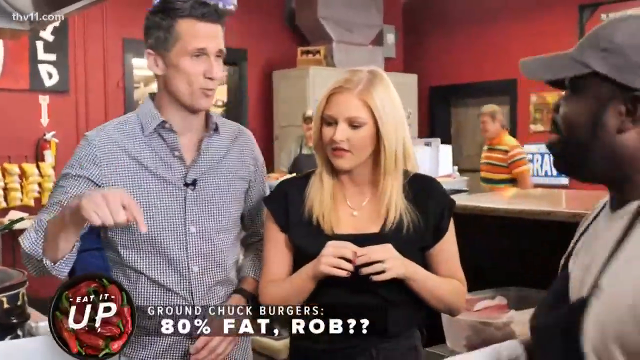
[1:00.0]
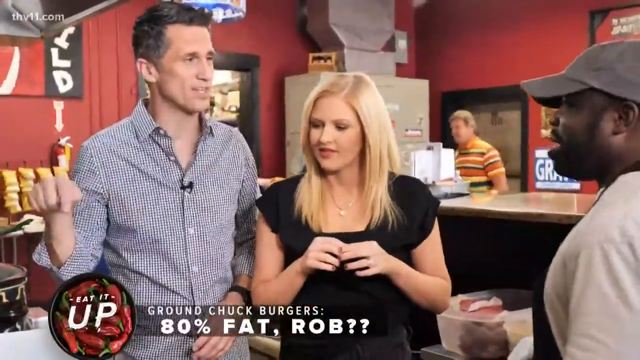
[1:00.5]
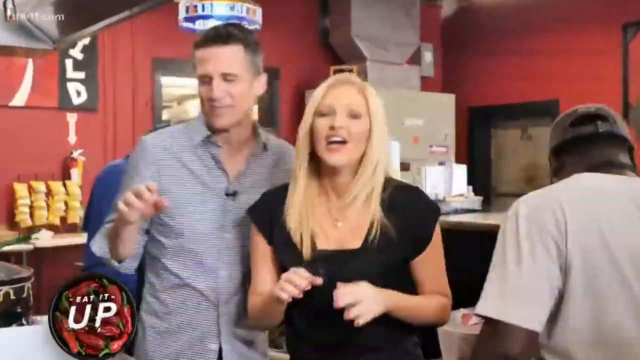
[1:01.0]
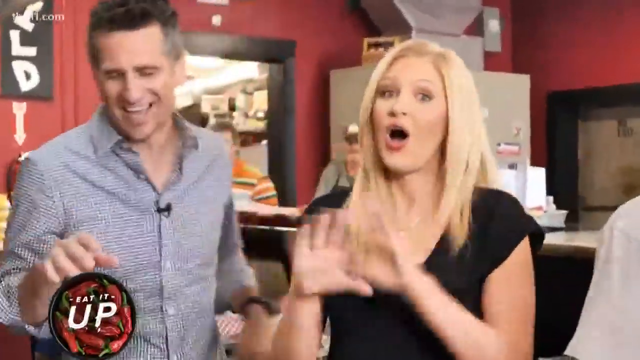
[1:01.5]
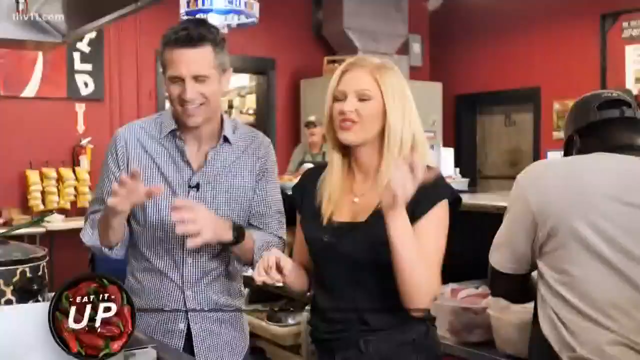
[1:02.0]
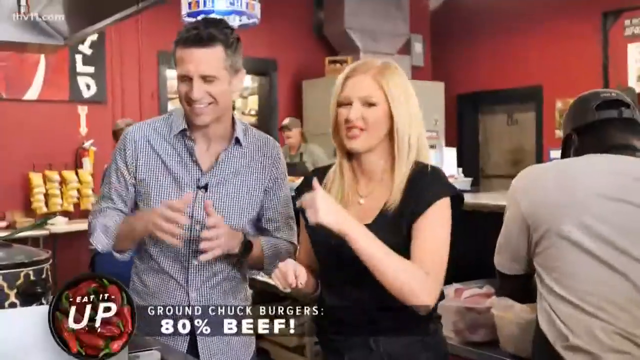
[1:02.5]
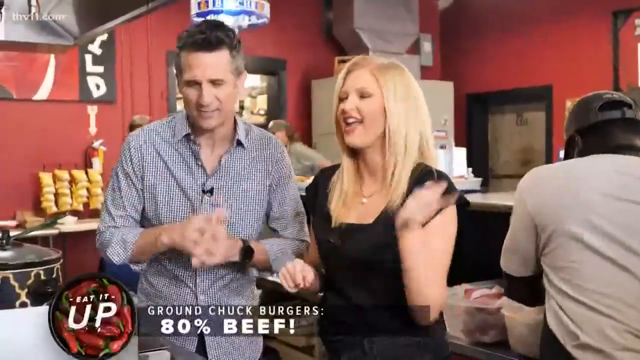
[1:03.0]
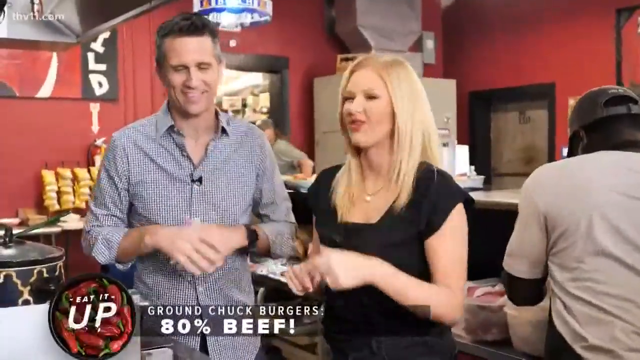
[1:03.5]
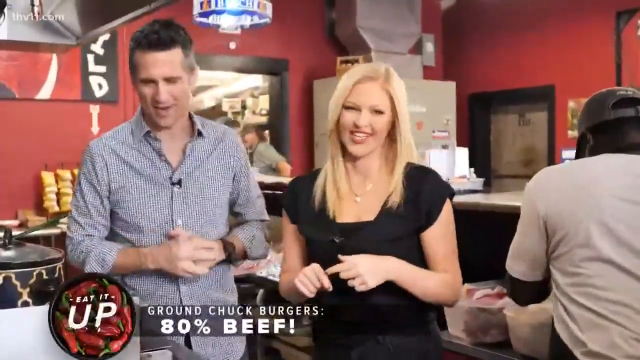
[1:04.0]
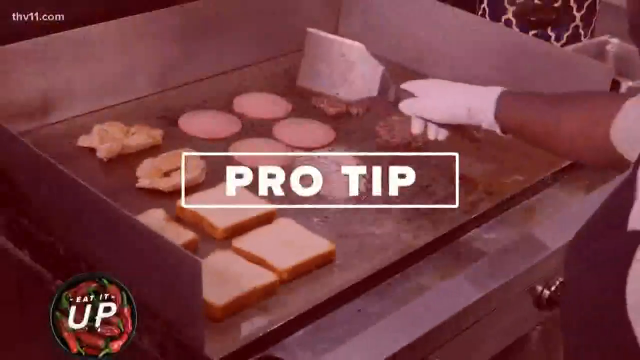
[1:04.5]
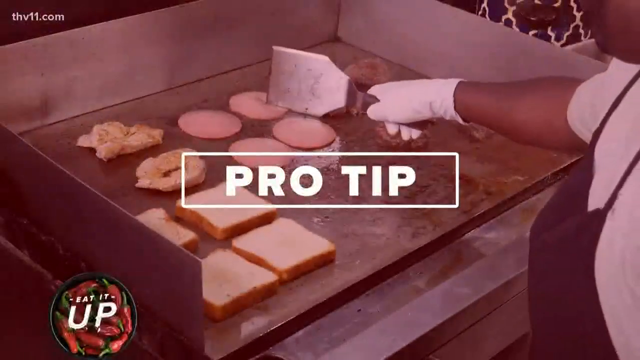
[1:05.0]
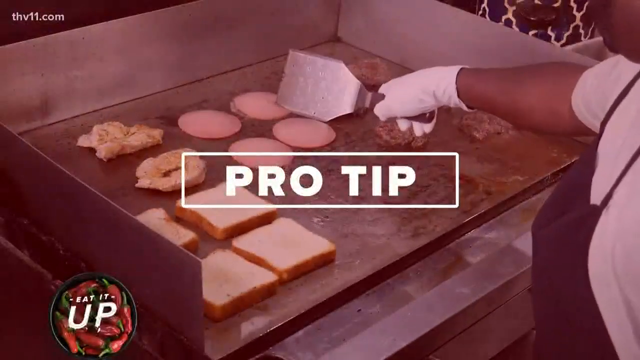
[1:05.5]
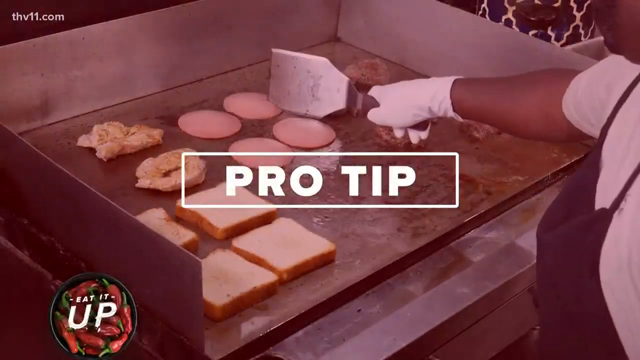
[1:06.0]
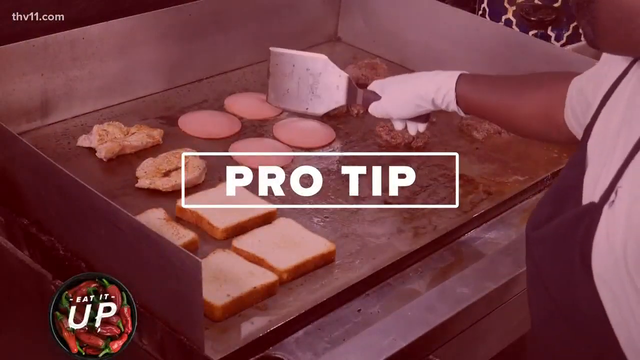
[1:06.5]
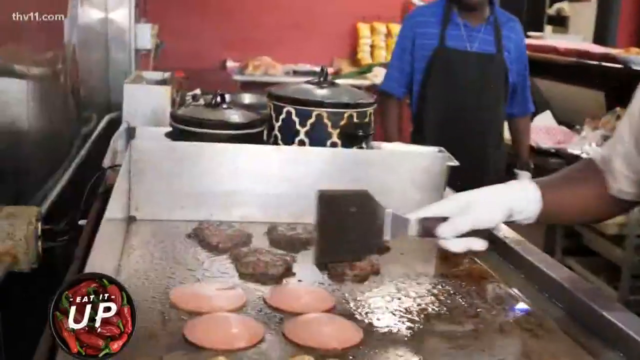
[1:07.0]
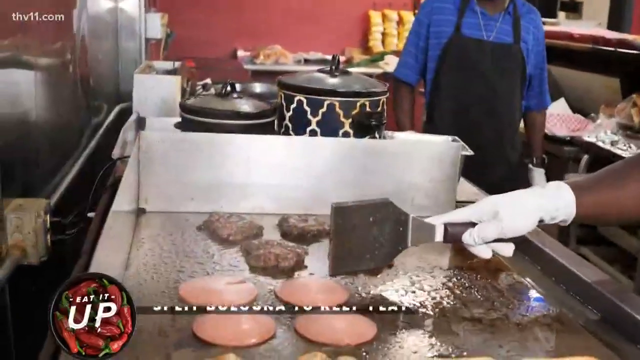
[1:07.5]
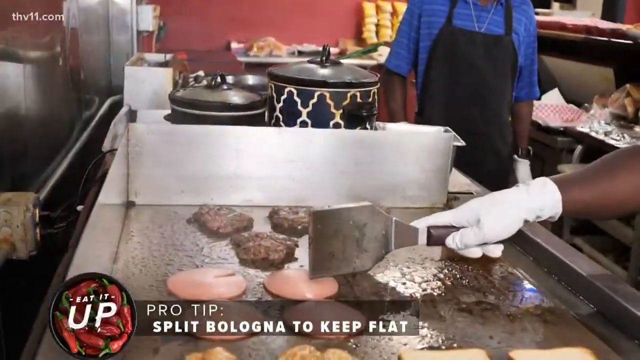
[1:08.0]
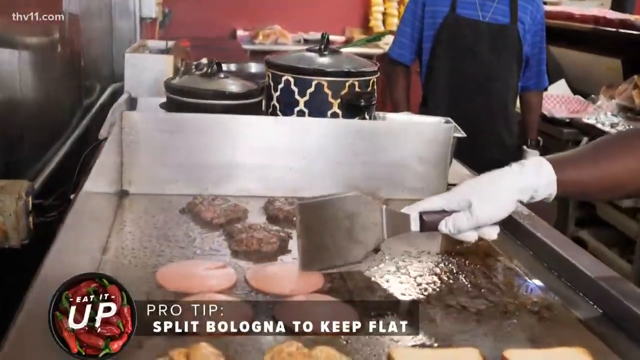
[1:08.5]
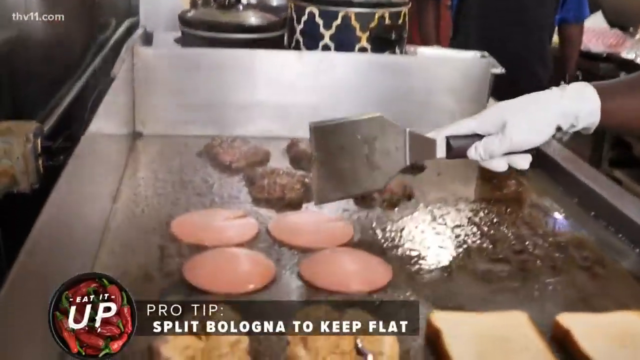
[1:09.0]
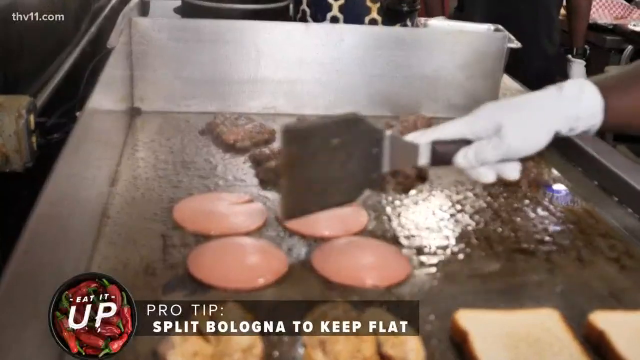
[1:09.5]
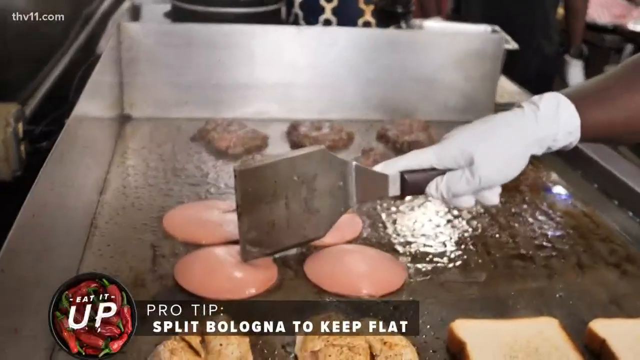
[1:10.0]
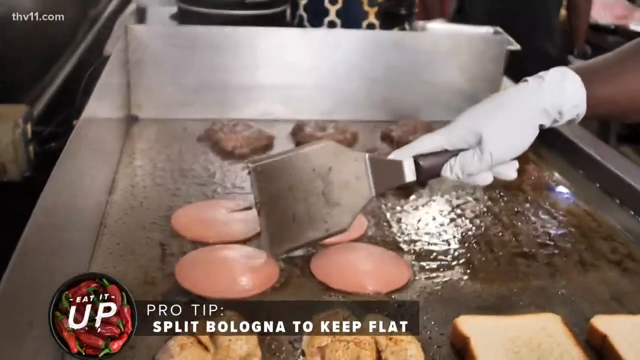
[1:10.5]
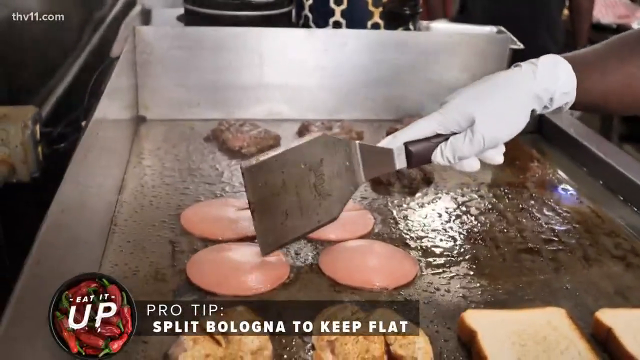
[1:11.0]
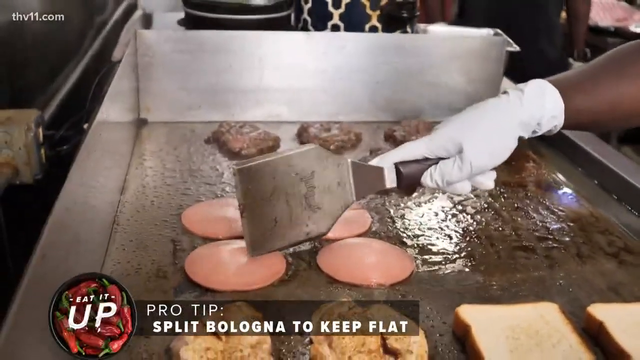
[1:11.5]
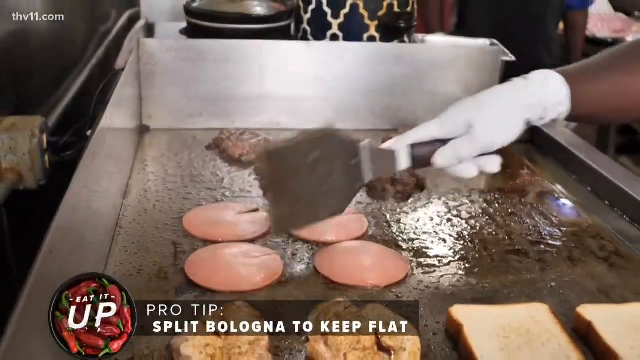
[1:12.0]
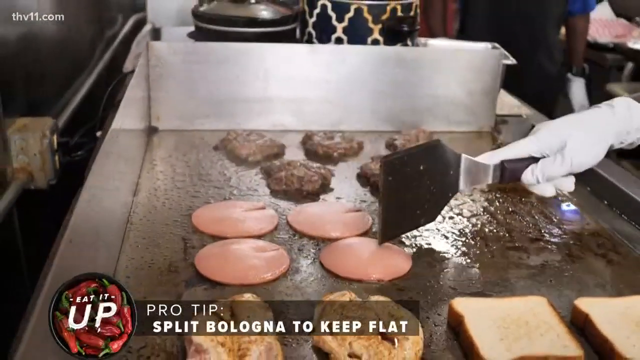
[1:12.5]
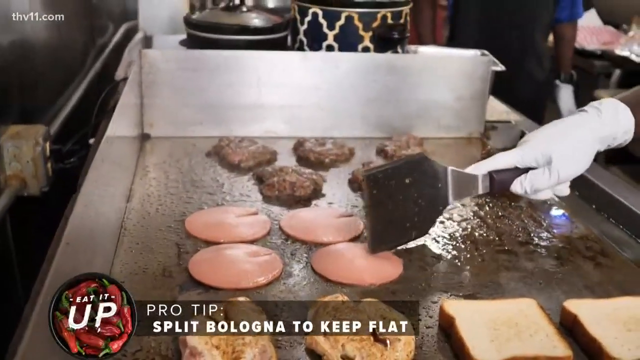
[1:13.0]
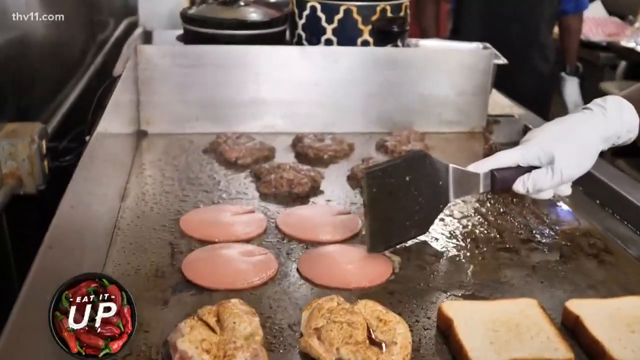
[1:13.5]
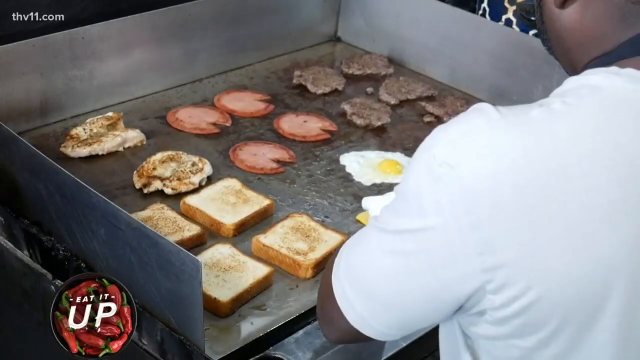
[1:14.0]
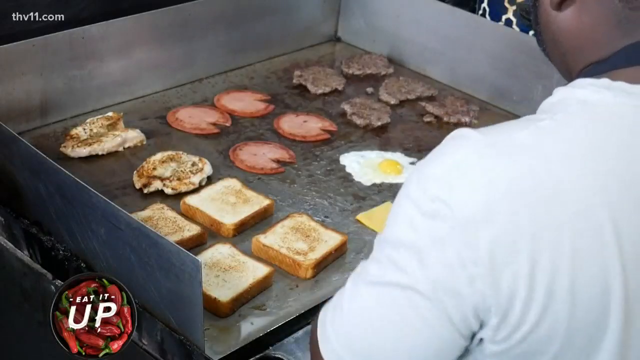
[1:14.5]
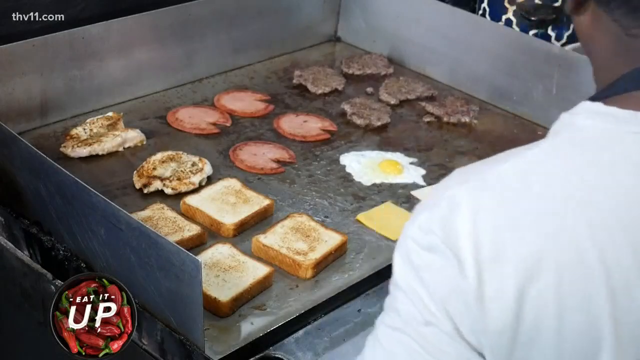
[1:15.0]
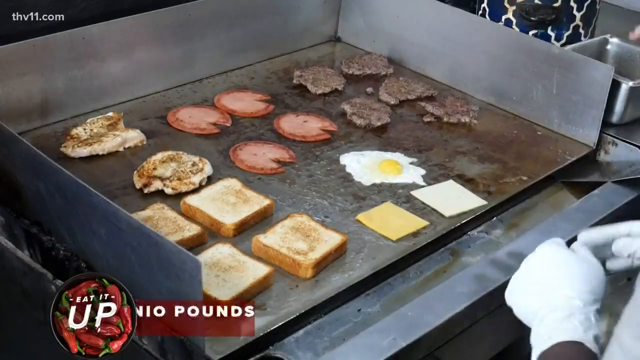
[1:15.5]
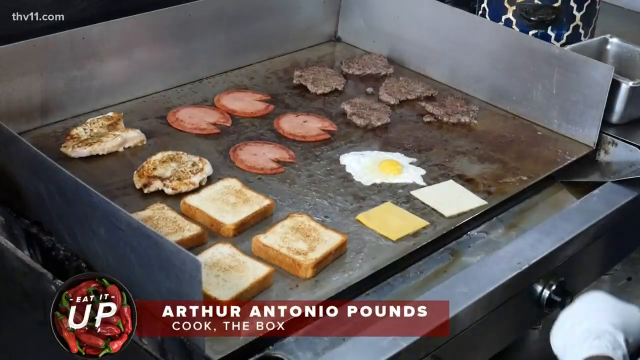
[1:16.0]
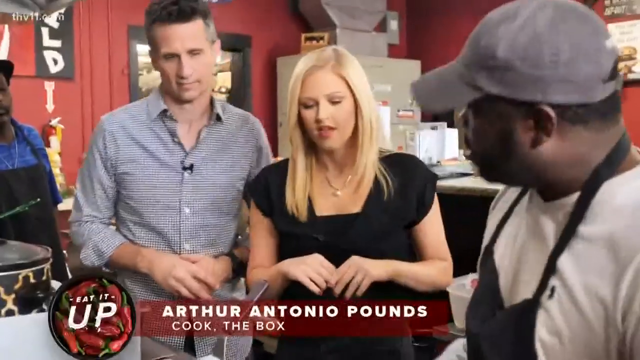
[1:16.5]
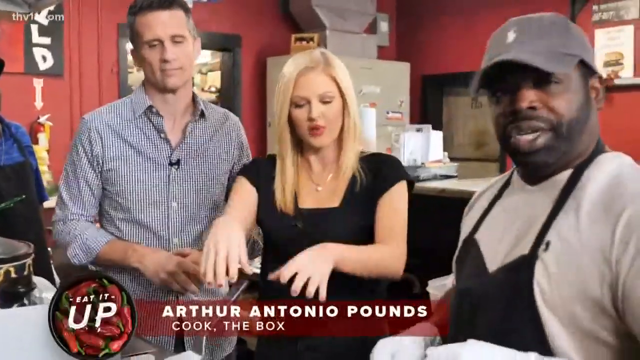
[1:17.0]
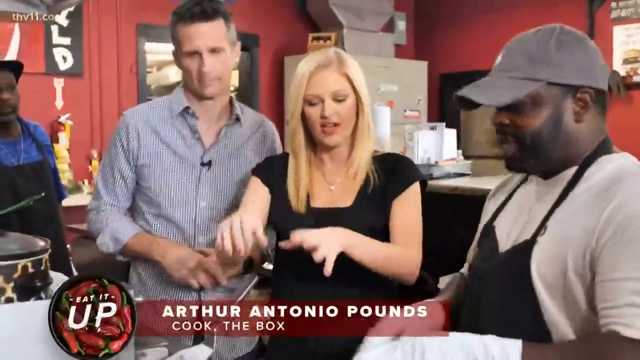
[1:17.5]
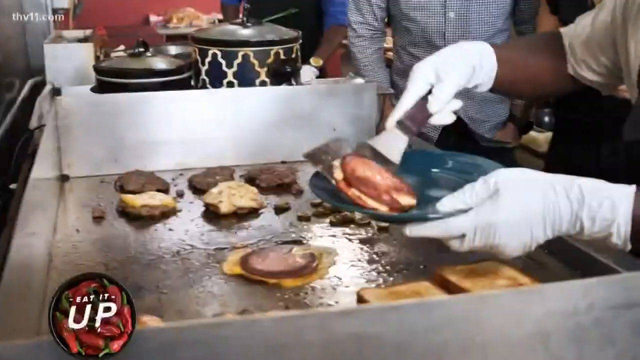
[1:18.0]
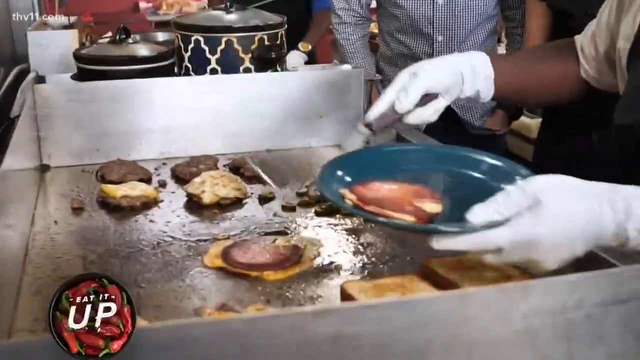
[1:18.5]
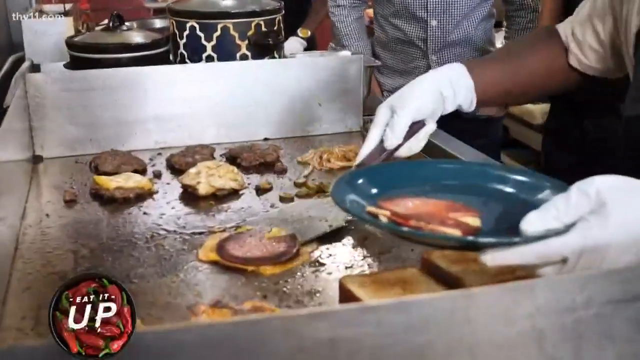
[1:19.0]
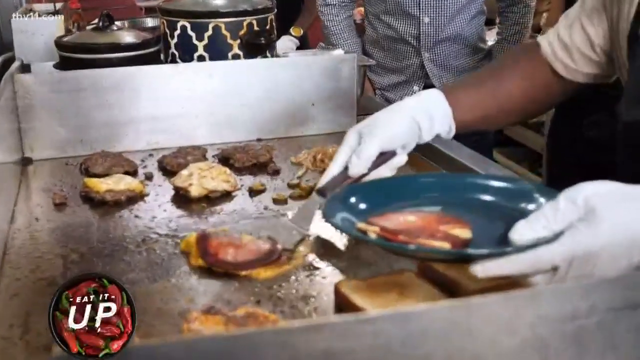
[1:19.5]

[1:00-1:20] In the kitchen, ground chuck burgers of 80% beef are featured, along with a pro tip to split the bologna to keep it flat. The cook flattens and splits the bologna, with burger patties in the same pan, along with bread that looks like toasted bread, cheese and eggs. The cook talks to the YouTubers; one wears a checked shirt and the other wears a top. The cook of The Box is Arthur Antonio Pounds, who wears a gray cap, an apron and a white T-shirt.